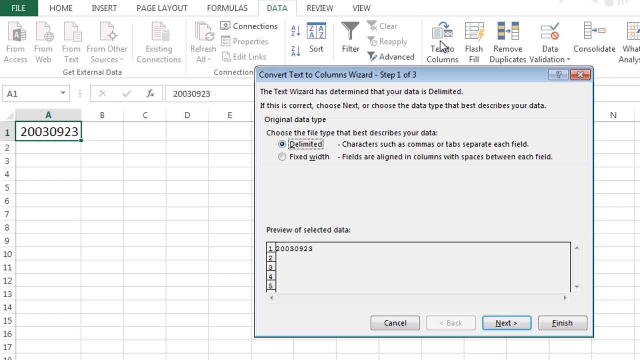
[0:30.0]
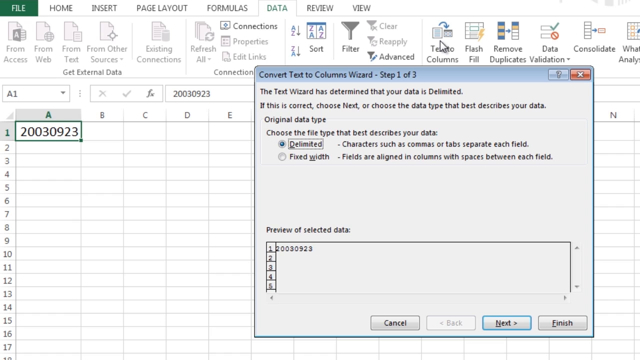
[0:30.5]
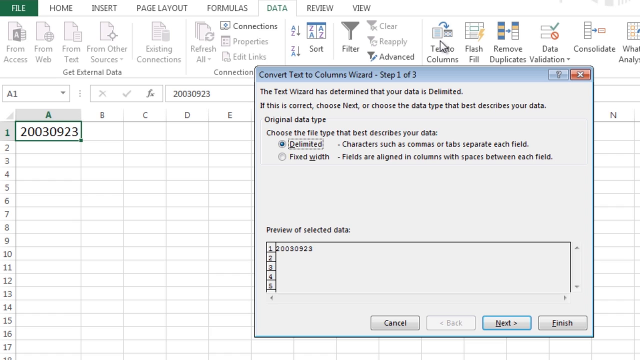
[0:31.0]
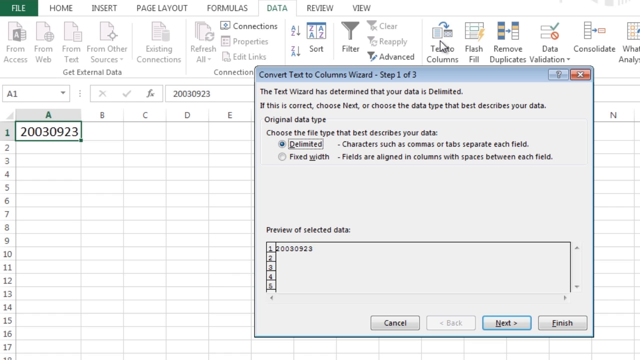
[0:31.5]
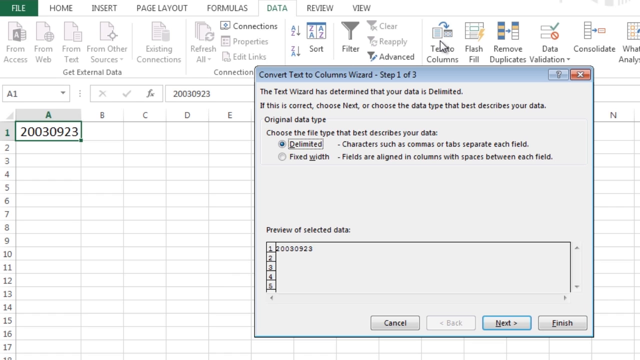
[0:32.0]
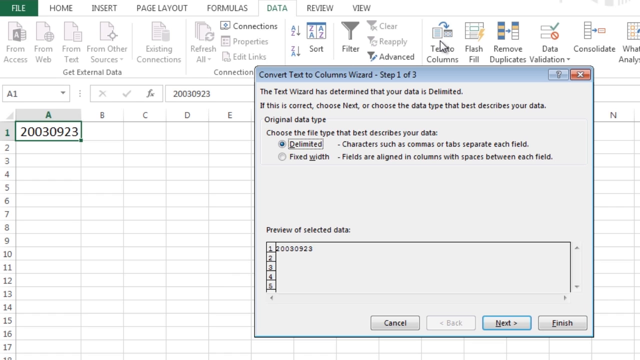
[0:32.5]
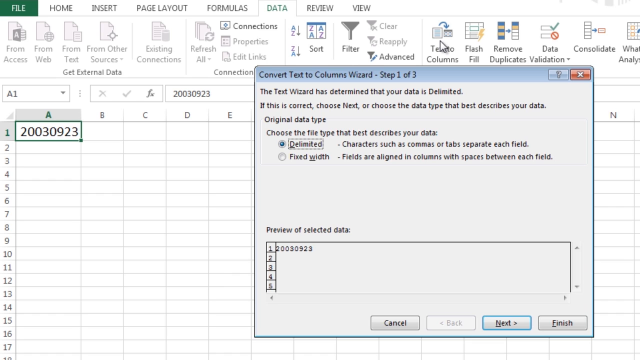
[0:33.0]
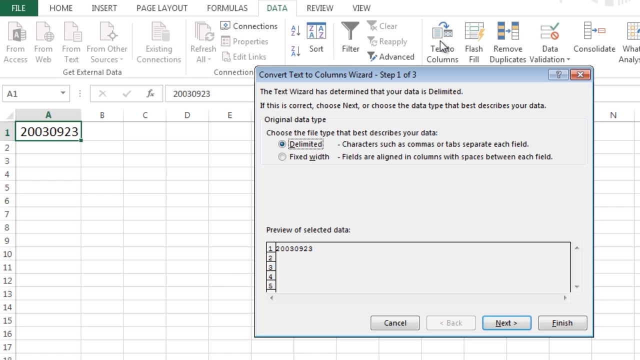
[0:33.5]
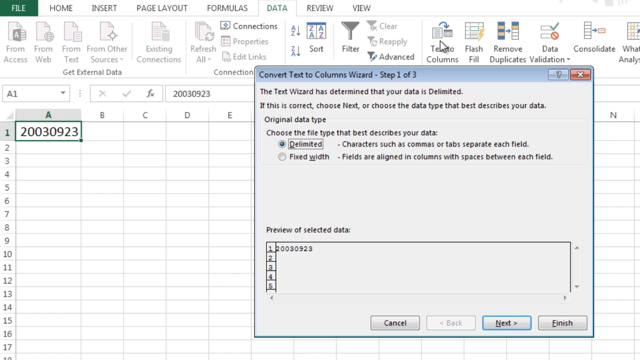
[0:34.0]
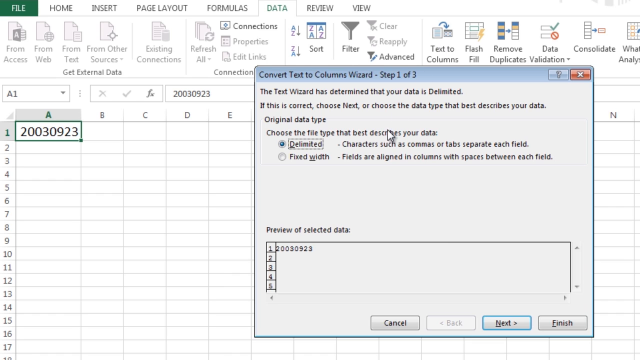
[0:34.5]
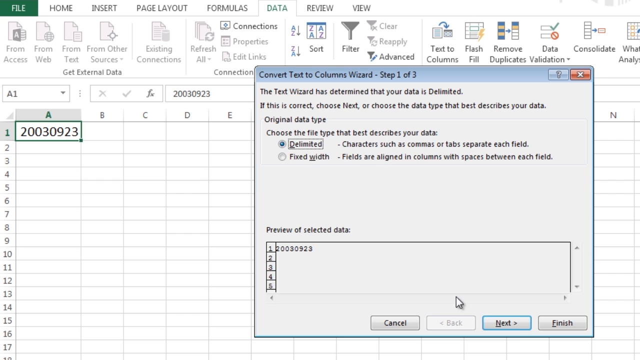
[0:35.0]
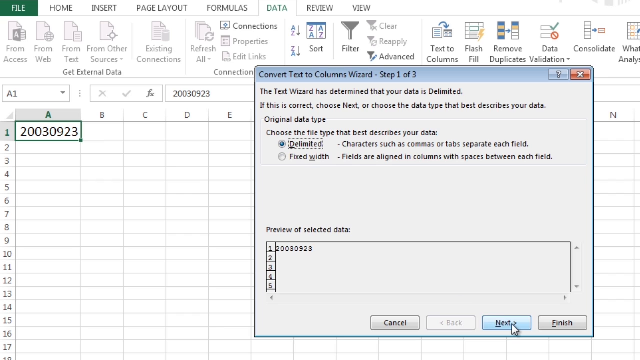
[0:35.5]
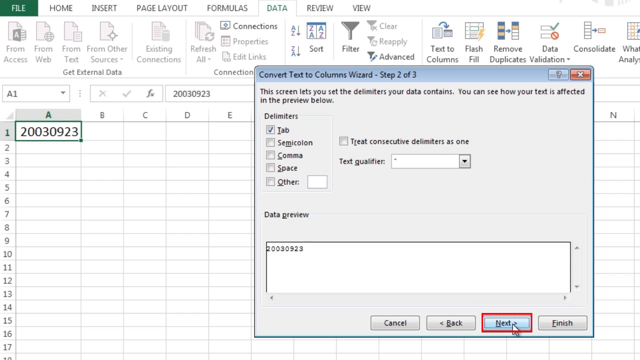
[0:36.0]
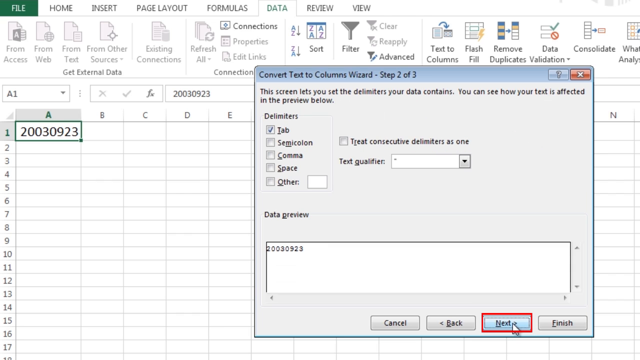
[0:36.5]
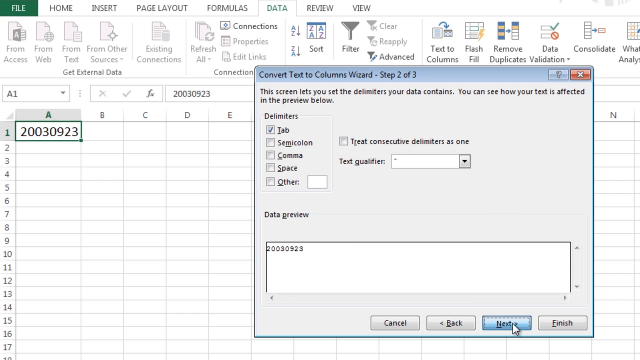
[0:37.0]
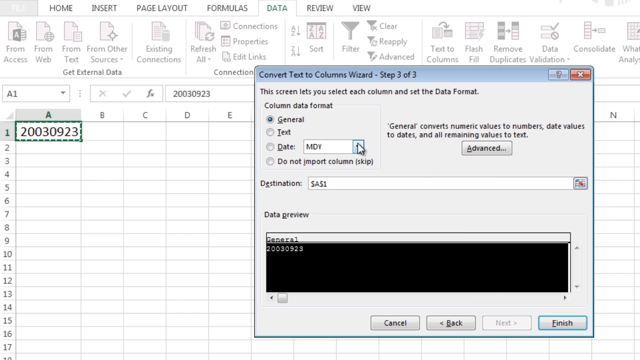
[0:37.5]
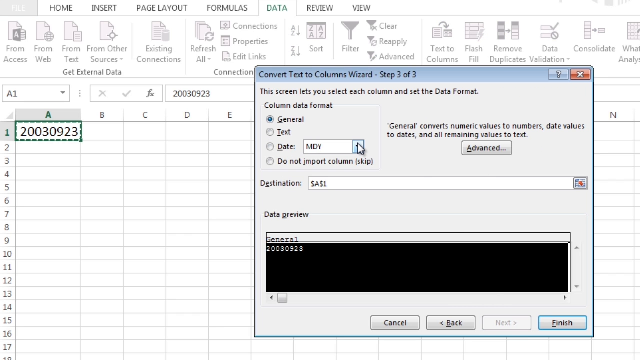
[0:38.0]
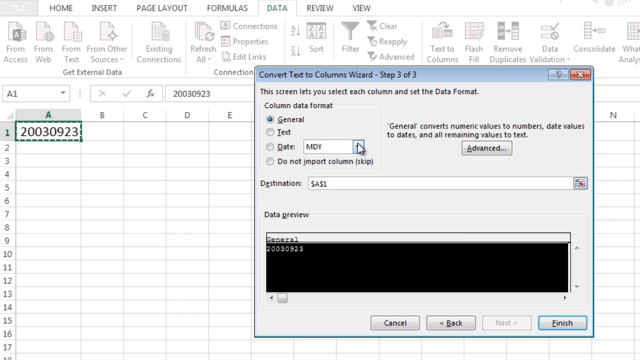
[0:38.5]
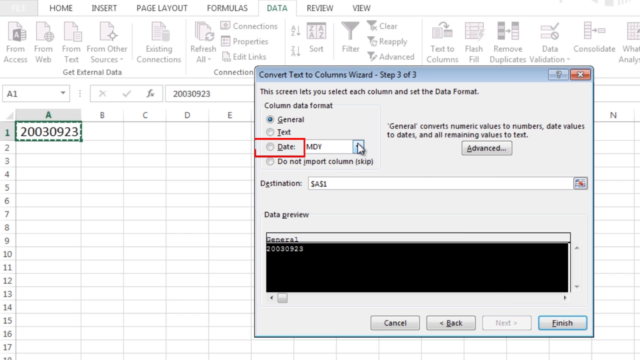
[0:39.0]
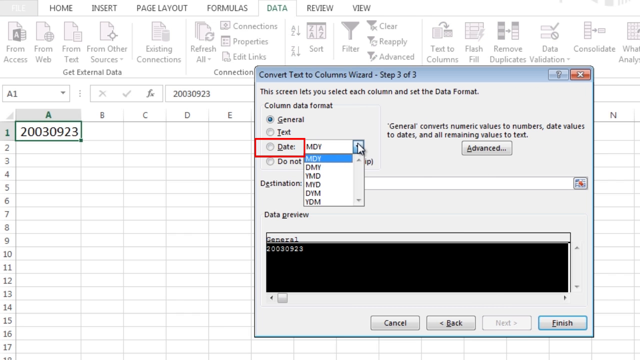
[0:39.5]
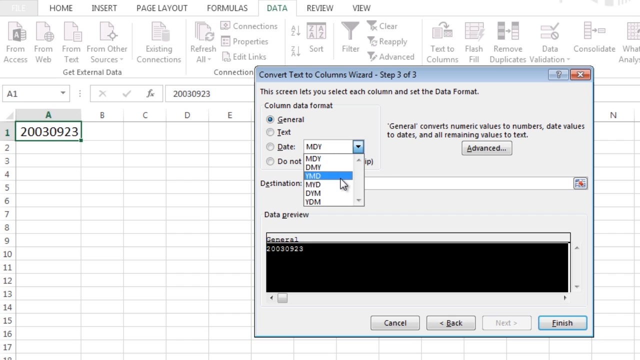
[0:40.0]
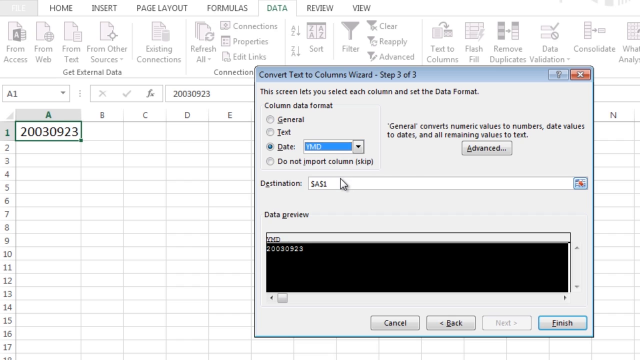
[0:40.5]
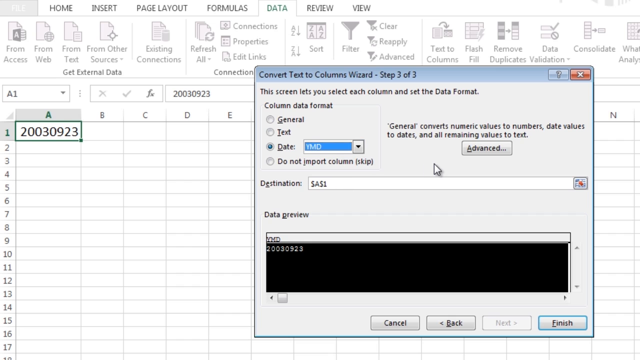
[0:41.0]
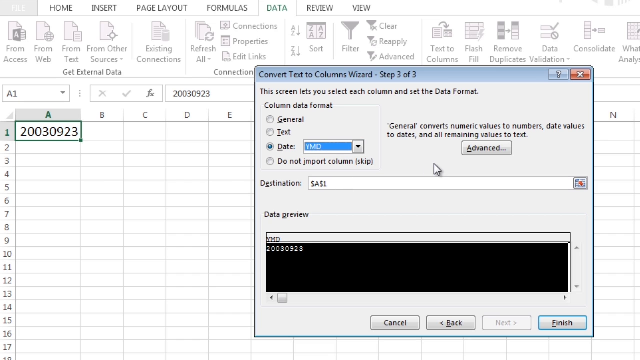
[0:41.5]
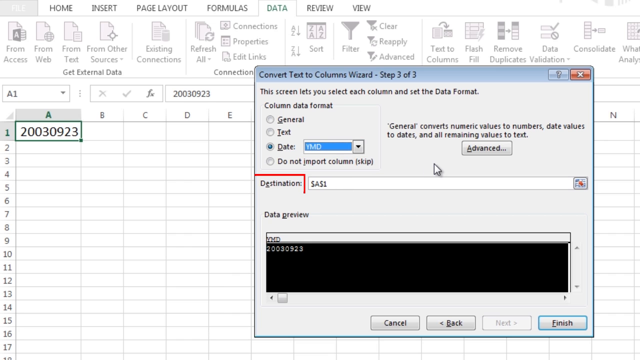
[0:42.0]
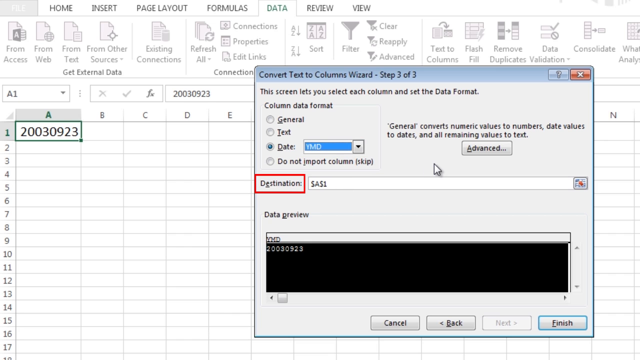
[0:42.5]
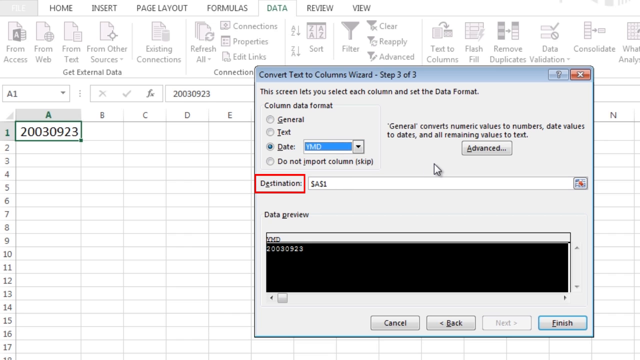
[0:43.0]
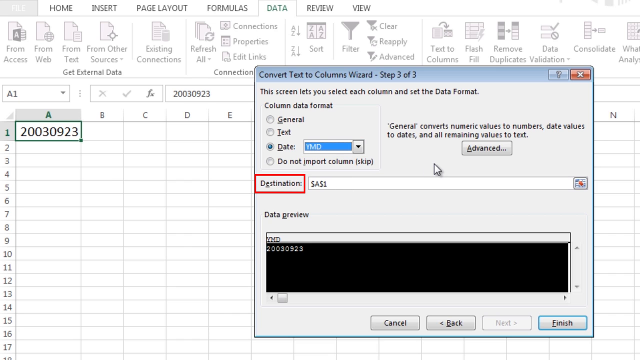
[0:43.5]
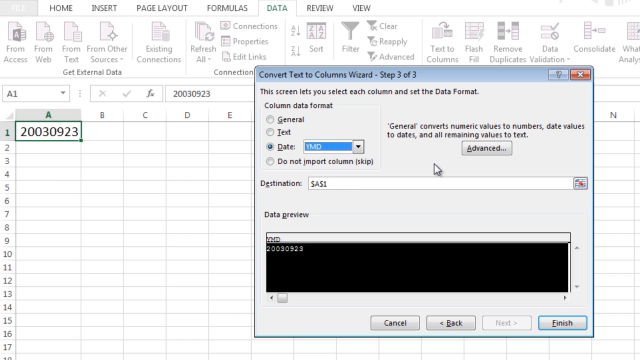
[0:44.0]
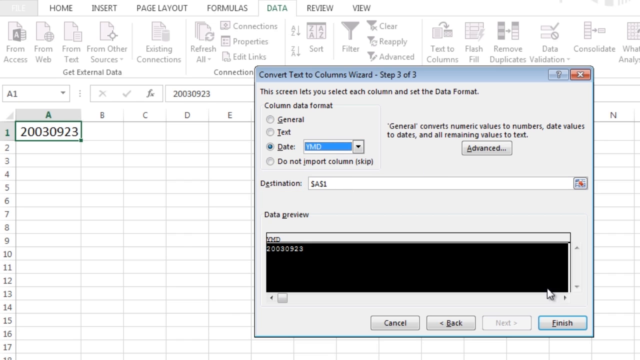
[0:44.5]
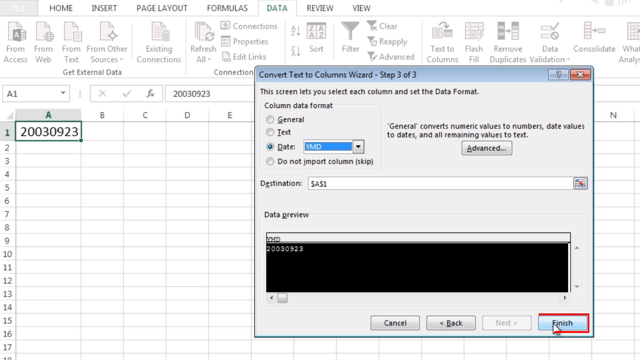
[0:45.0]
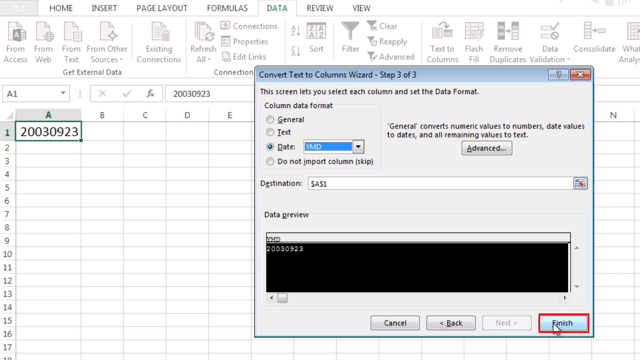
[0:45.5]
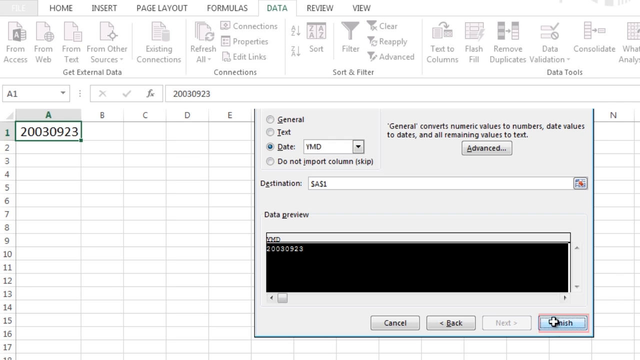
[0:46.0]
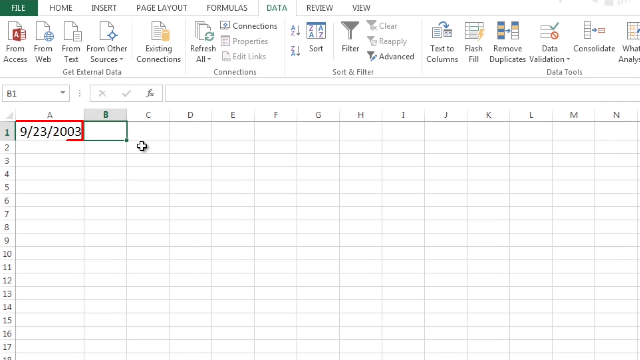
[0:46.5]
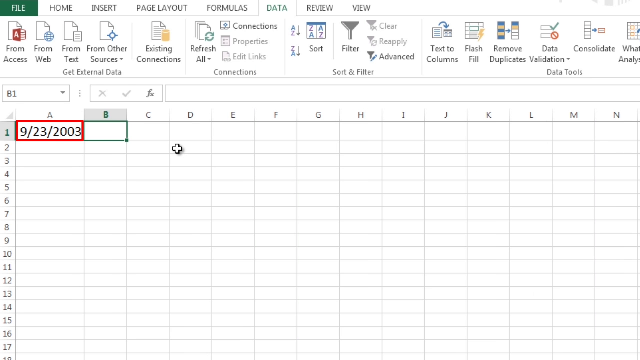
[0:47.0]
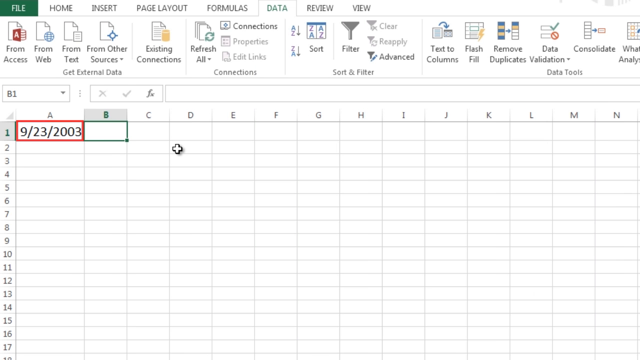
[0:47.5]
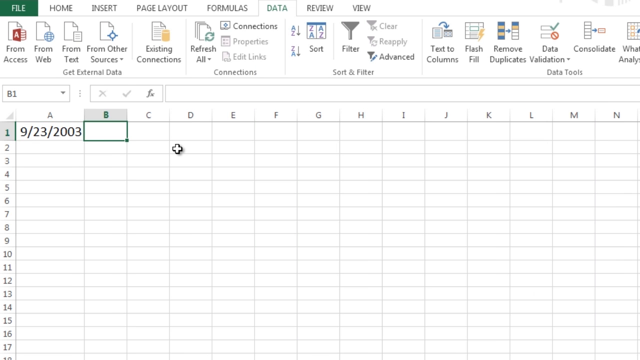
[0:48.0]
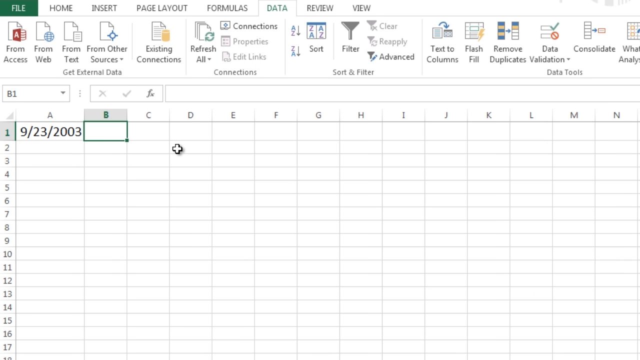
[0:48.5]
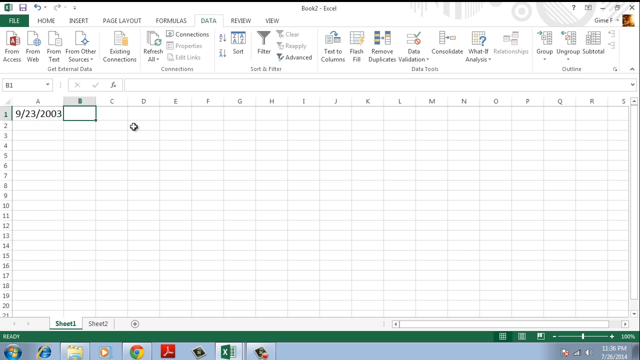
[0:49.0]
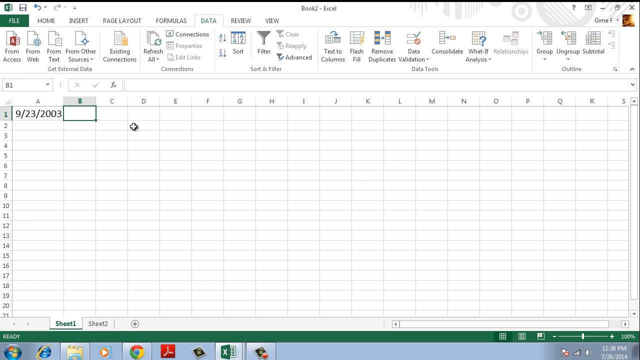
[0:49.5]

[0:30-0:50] The Convert Text to Columns Wizard, opened from the Data ribbon in Microsoft Excel, continues with the delimited option. The cursor moves down to Next and clicks it, then the column format is changed to date. The destination is left unchanged: it is the one cell in column A that has text. The date format is applied to the original cell containing 20030923, which turns into September 23, 2003. The wizard closes, the view zooms out to show the whole Excel sheet, and cell B1 is selected, with nothing typed into it yet.